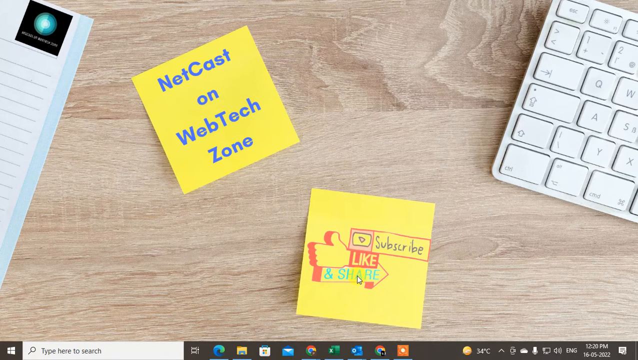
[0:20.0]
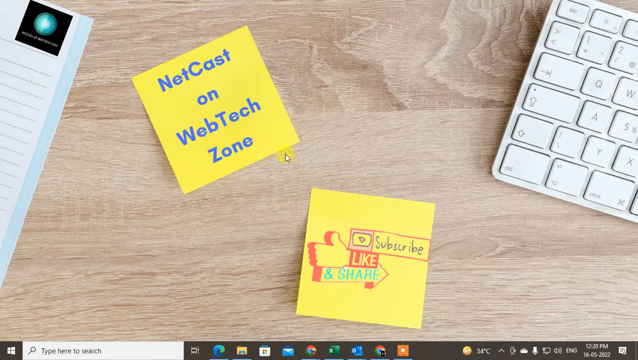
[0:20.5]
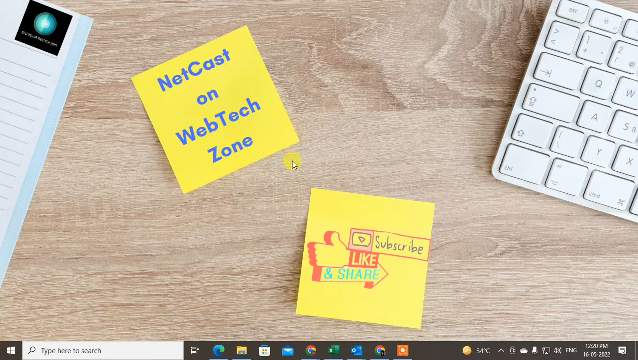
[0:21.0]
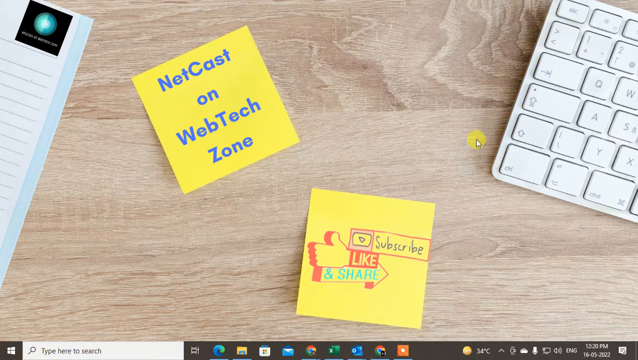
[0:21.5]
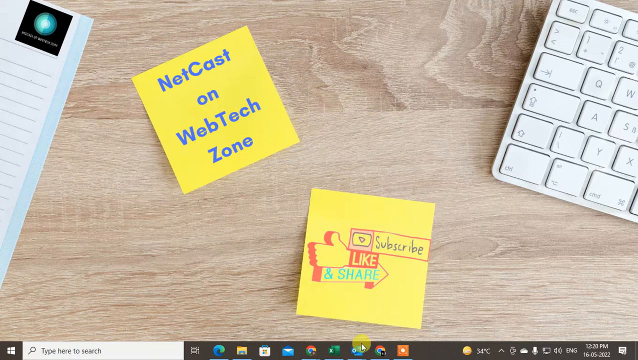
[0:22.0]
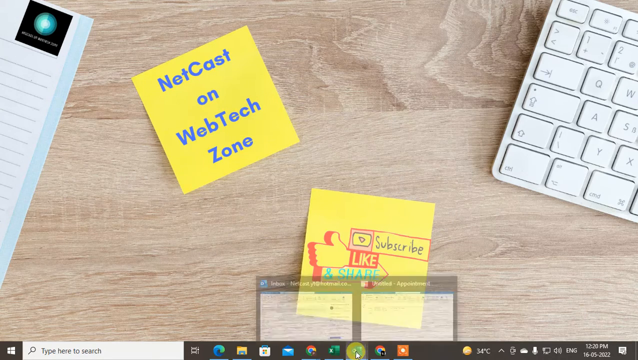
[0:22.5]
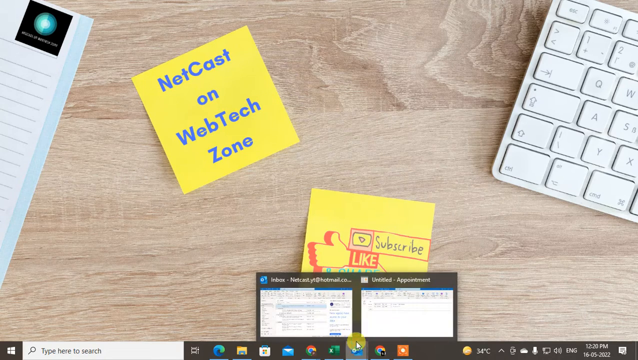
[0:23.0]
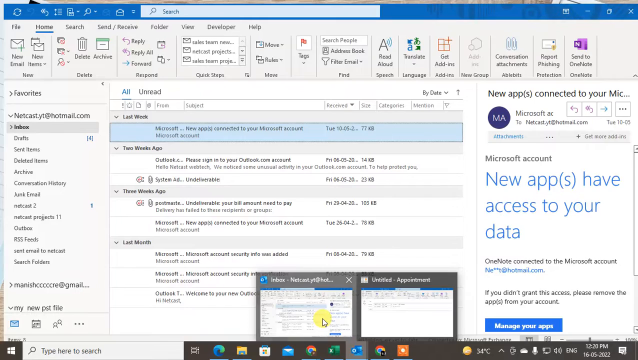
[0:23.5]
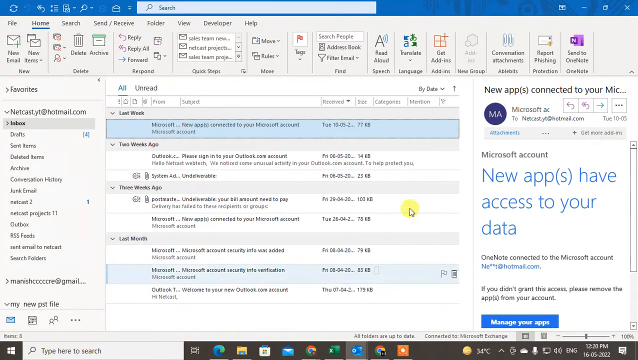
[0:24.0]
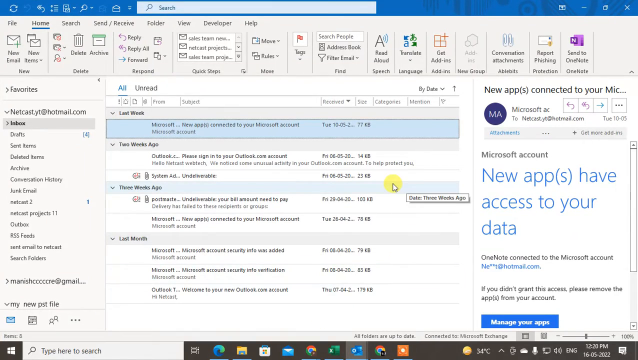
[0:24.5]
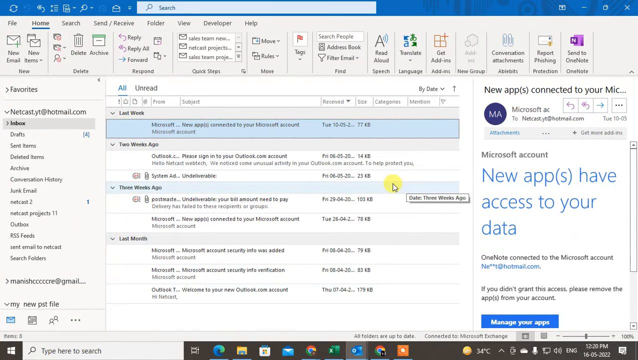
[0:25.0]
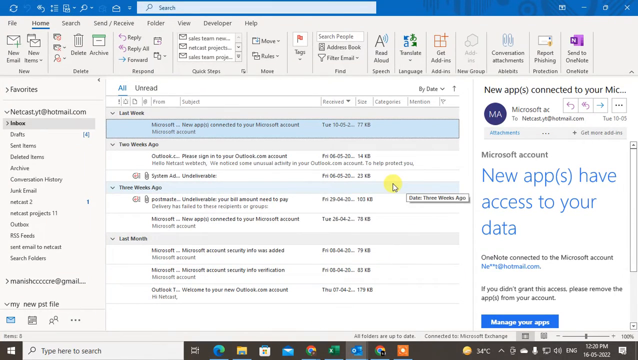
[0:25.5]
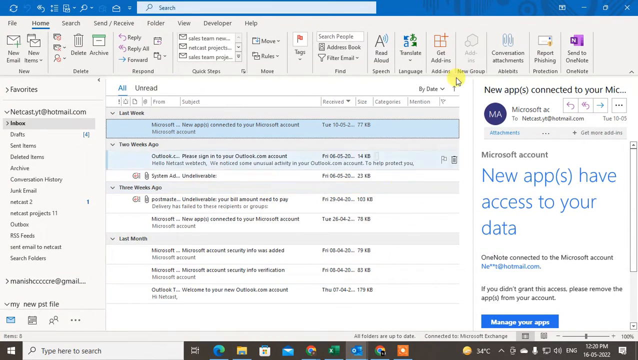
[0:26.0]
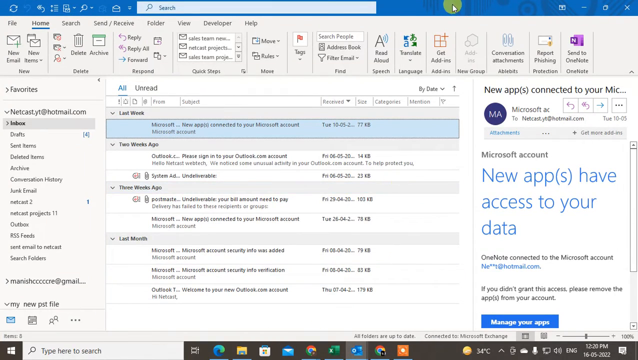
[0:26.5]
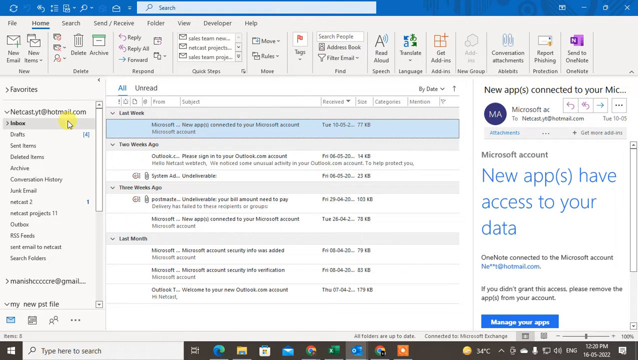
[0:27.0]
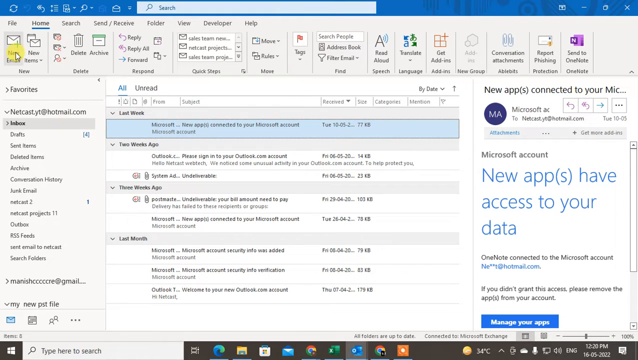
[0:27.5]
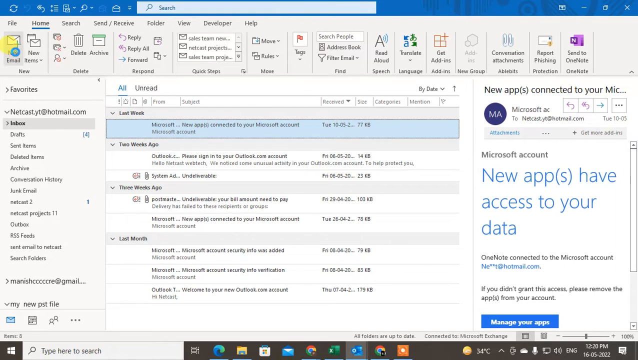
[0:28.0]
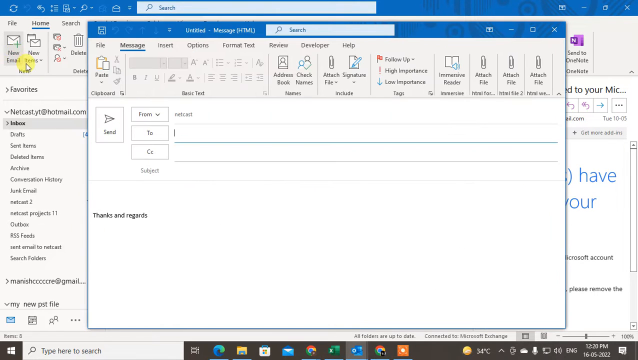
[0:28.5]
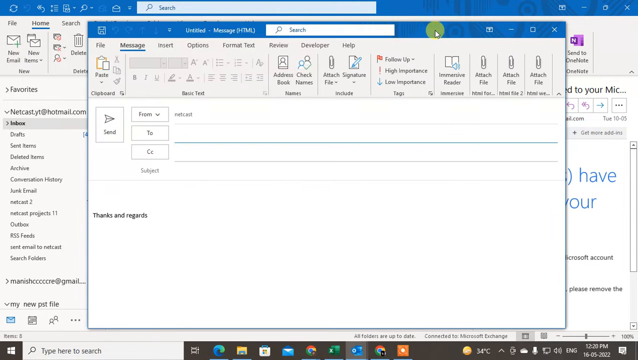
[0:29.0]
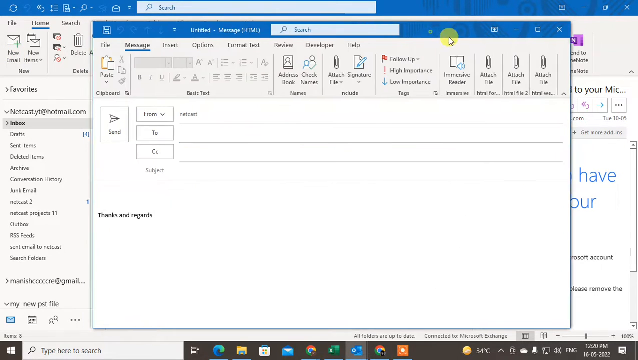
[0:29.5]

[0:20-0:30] The user makes a large, broad, sweeping circular motion with the mouse around the like-and-subscribe sticky note, then briefly hovers over an email program, which pops up two miniature windows. He selects one of them and makes it full screen. The program has a blue theme at the top, and an email address is visible on the left-hand side near the top: "netcast.yt@hotmail.com".